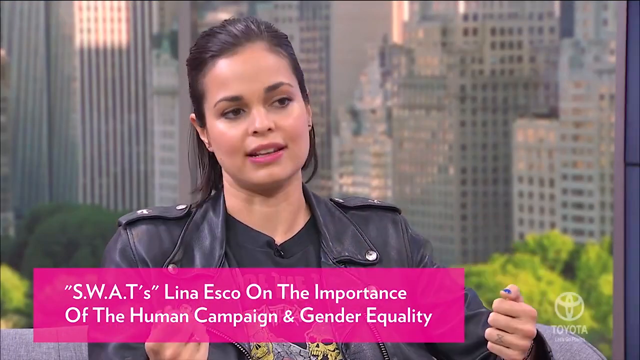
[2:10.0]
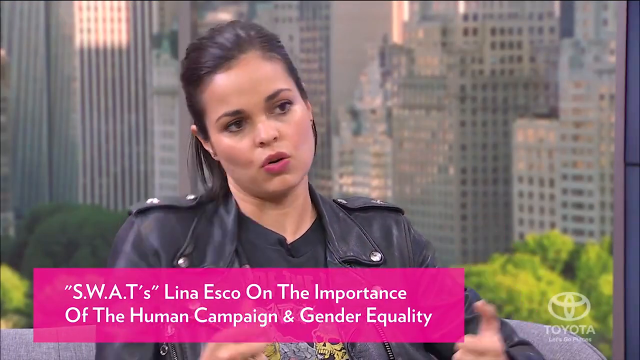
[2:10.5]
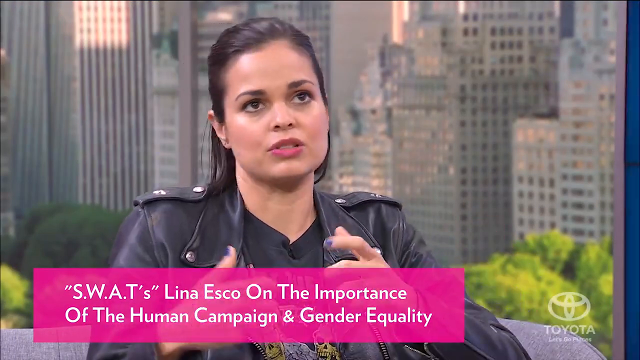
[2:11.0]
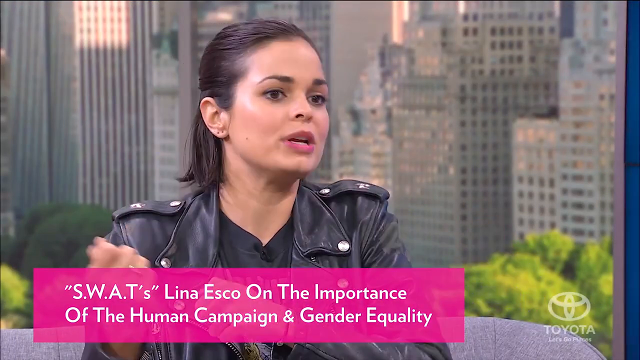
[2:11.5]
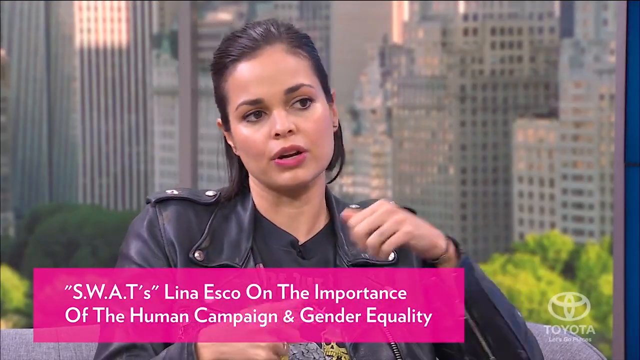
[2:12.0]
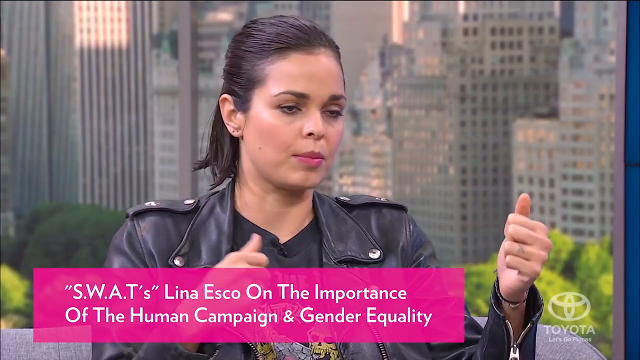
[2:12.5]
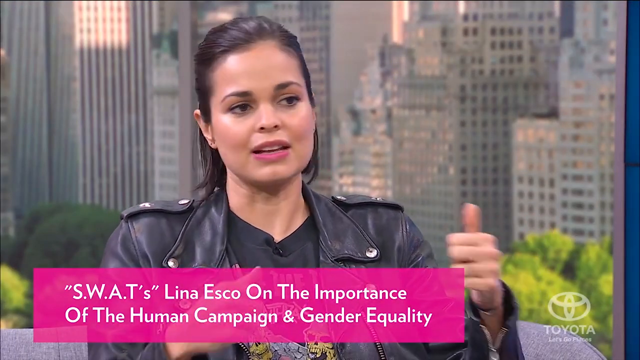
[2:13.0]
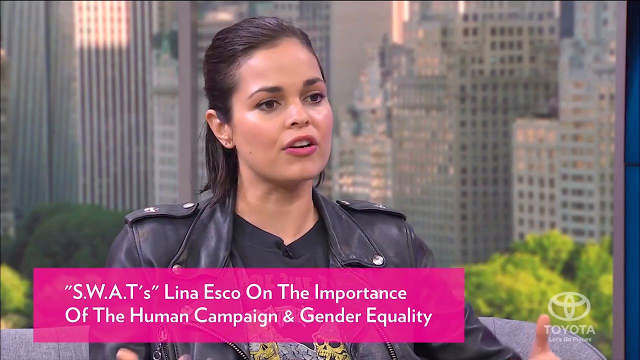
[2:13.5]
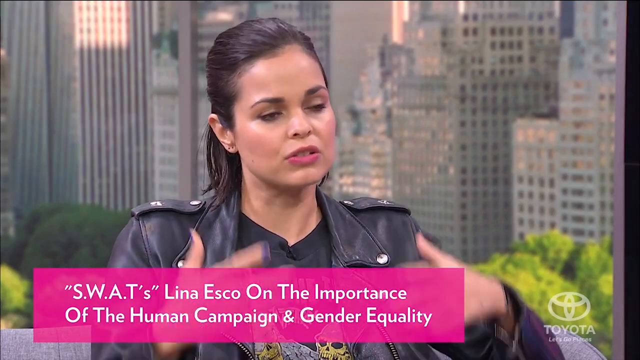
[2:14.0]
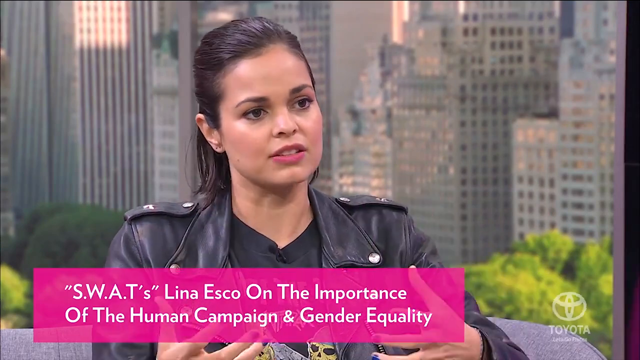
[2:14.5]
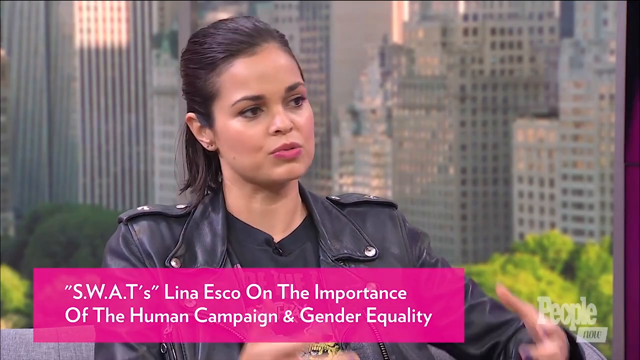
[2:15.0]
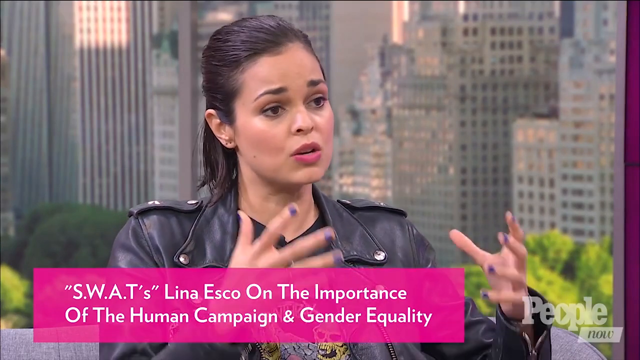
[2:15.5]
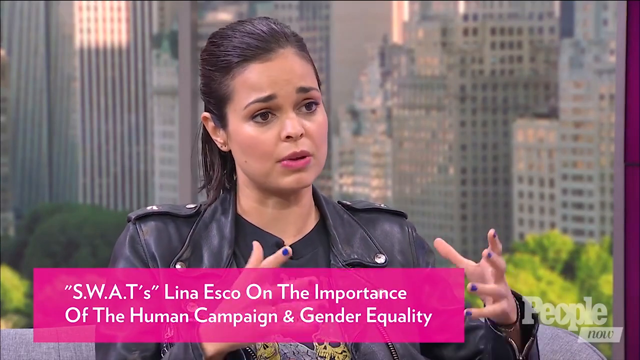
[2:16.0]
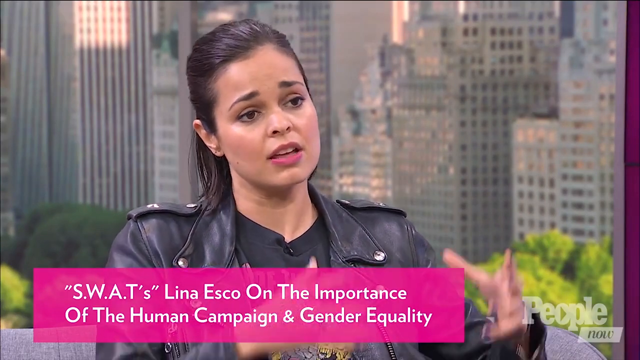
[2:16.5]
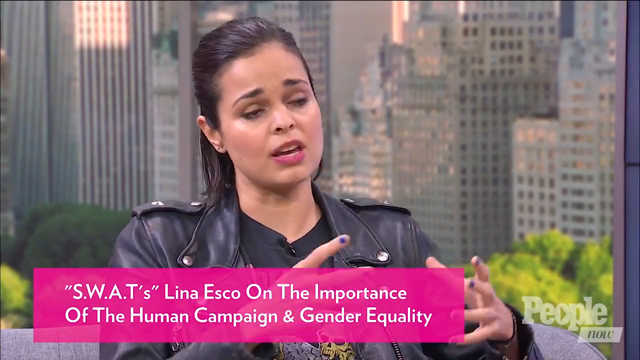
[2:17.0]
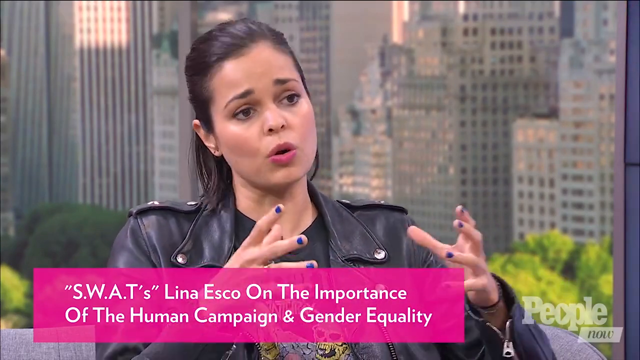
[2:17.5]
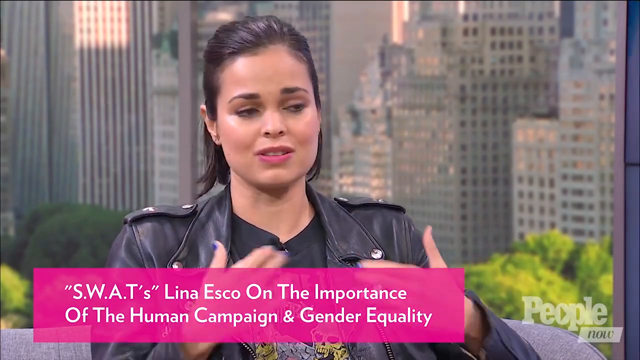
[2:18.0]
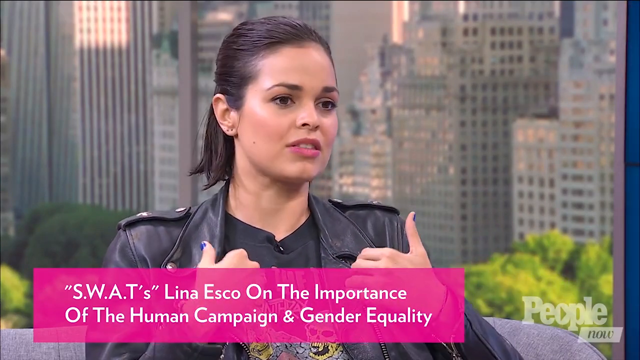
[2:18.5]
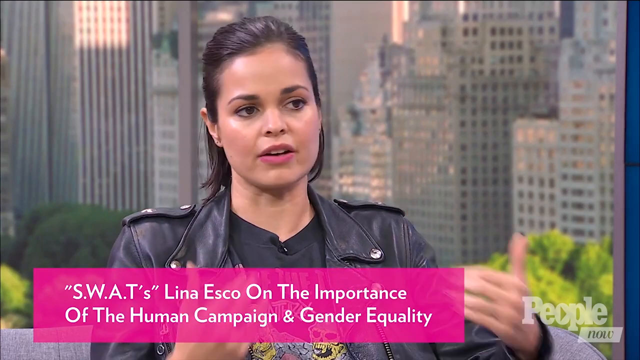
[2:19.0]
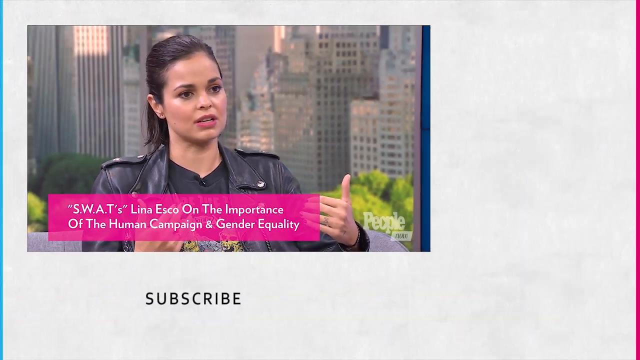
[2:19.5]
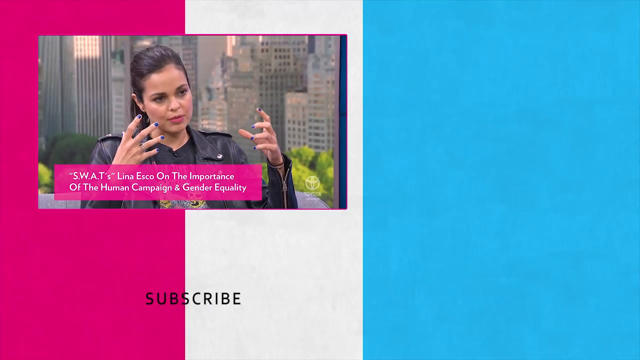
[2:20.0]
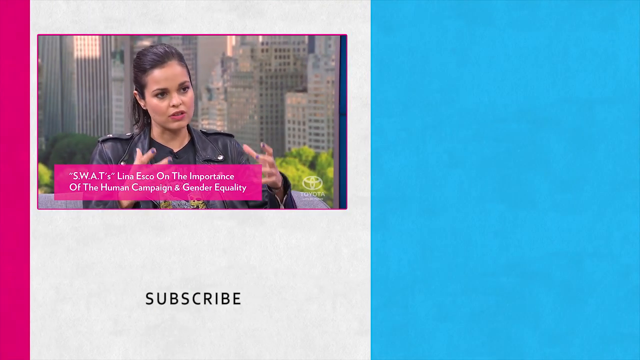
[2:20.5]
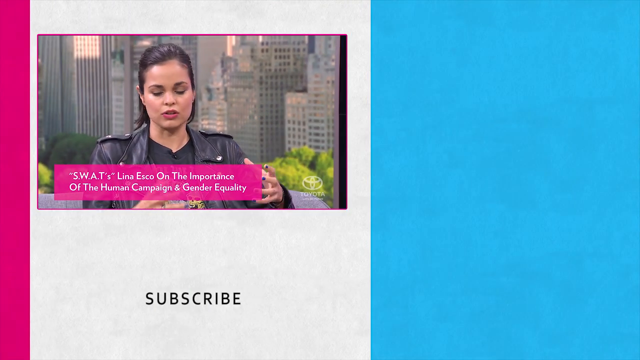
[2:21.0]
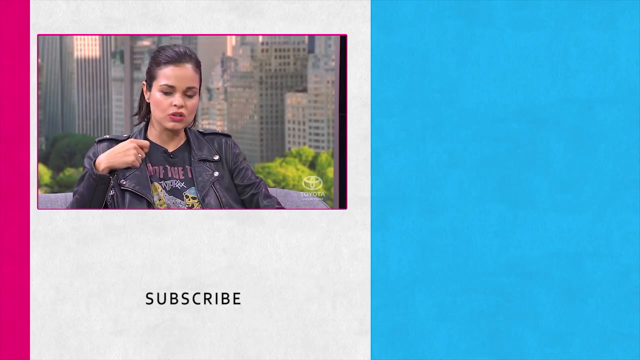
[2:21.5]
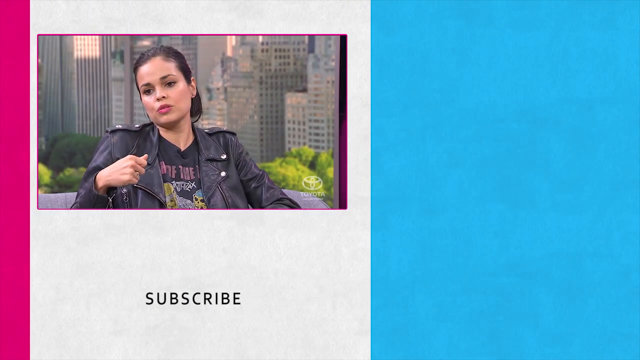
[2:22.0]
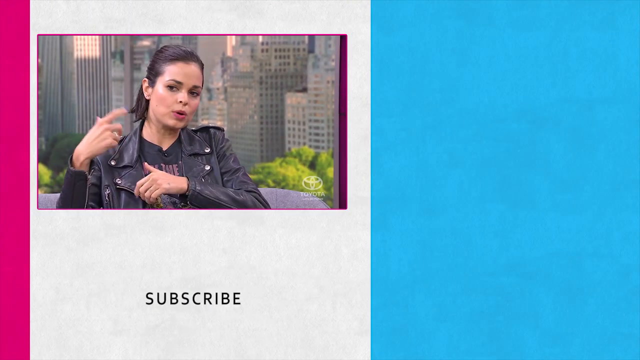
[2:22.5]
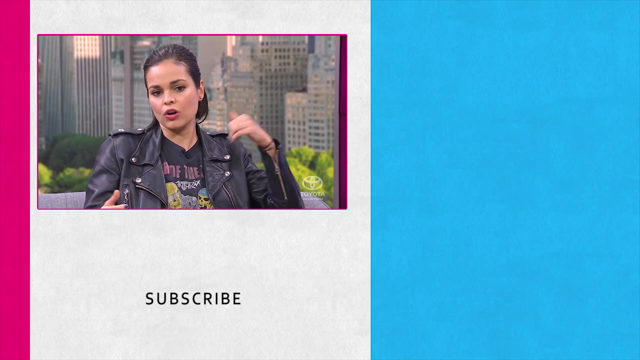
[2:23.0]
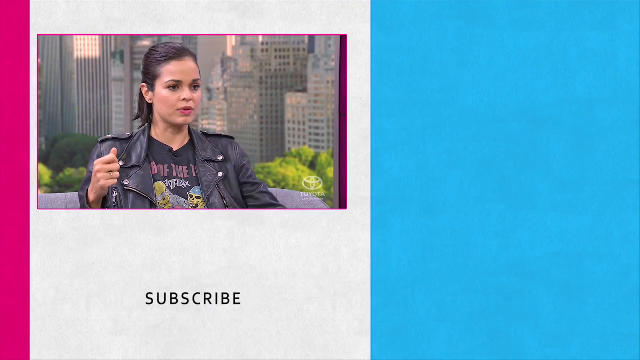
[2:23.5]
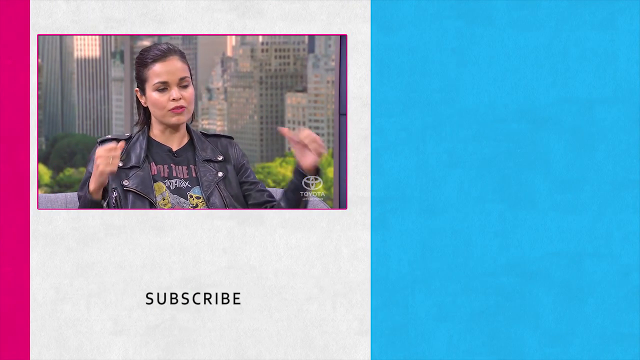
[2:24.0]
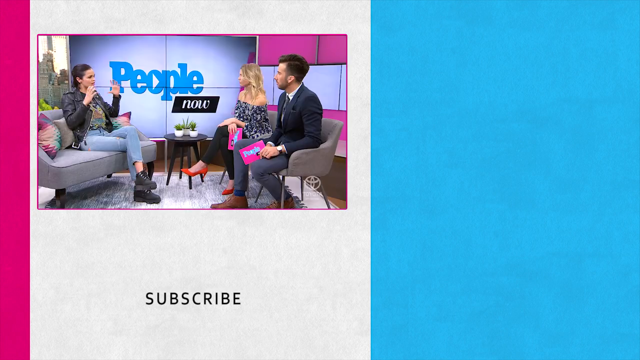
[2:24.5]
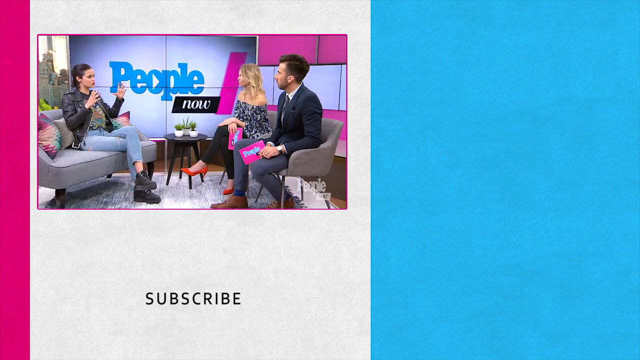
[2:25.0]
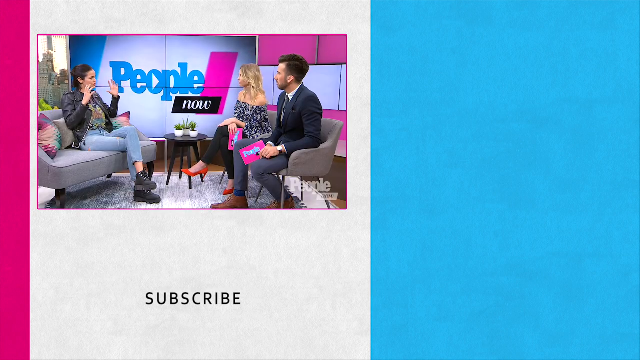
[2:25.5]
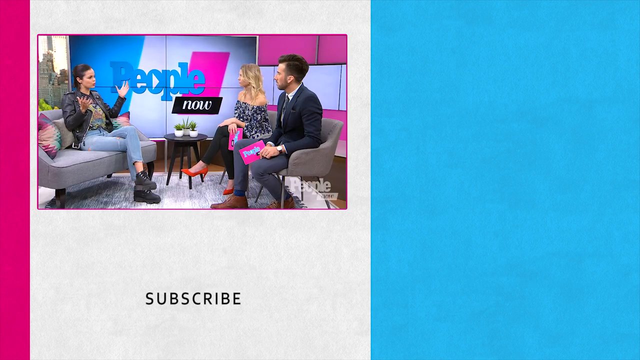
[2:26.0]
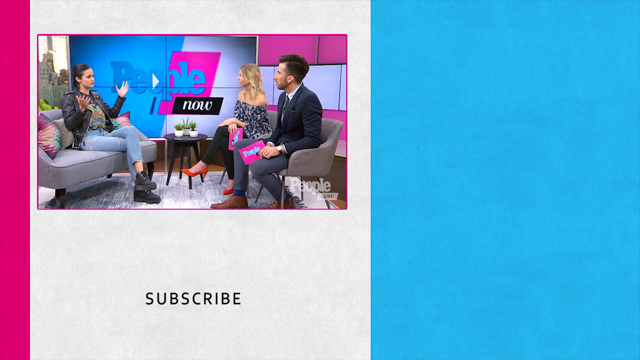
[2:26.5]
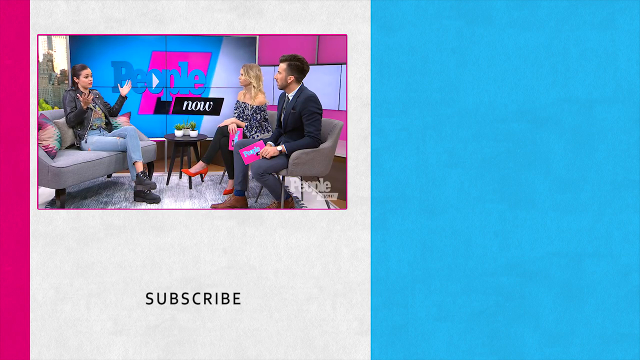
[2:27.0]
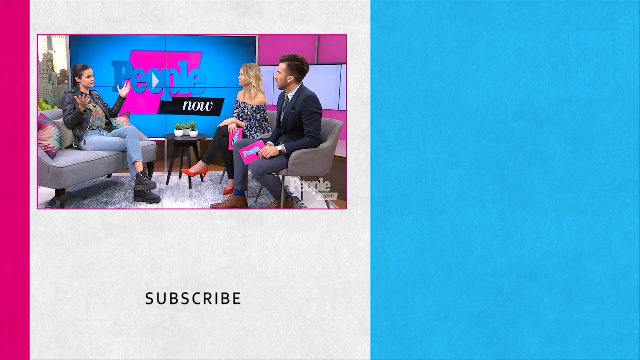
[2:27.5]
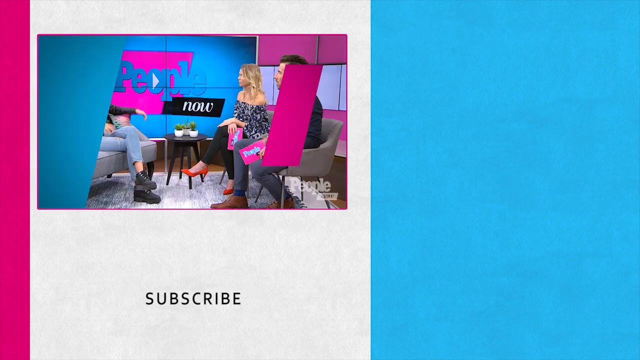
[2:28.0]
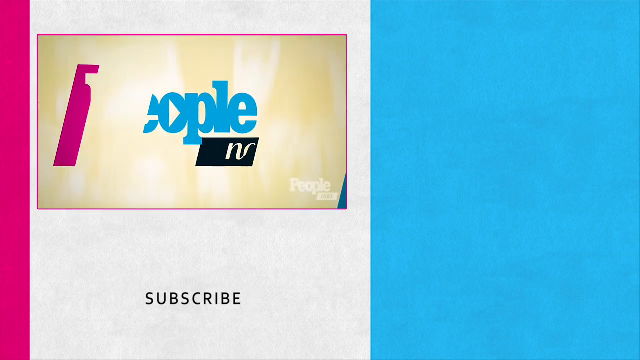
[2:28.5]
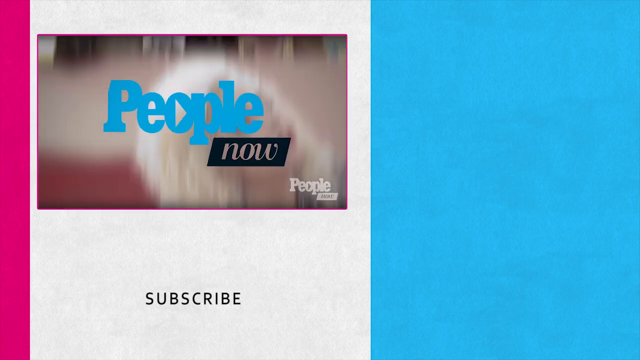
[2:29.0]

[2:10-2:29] The actress is still talking, and text at the bottom reads "on the importance of human campaign and gender equality". The video shows the studio again, zooming in on the two presenters asking questions and the interviewee. There are three gray couches in the room, and each person sits on one. The blonde presenter wears red shoes, a flowery shirt and black pants, looking fashionable and corporate at the same time.